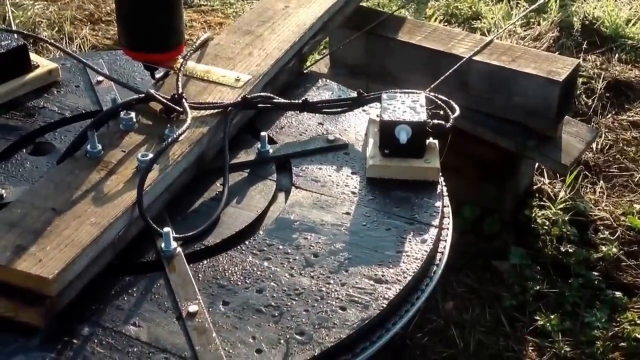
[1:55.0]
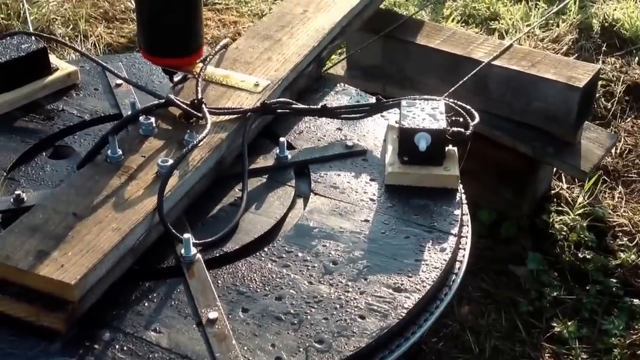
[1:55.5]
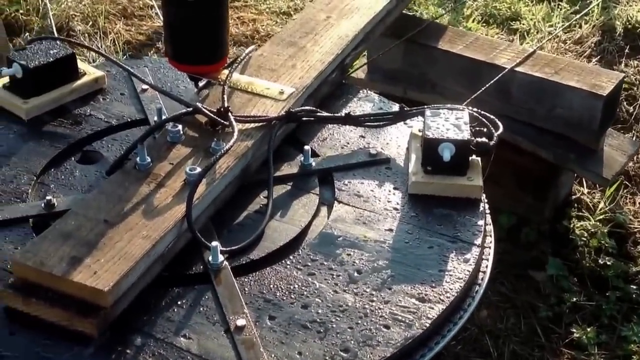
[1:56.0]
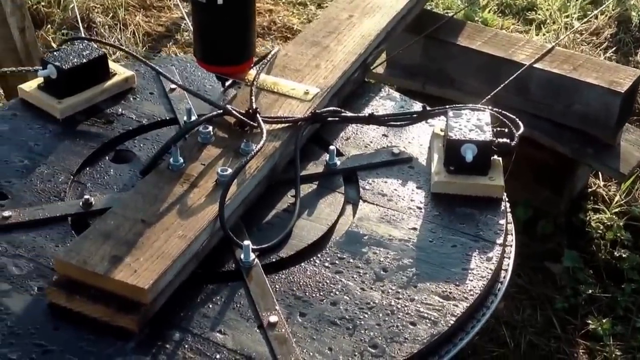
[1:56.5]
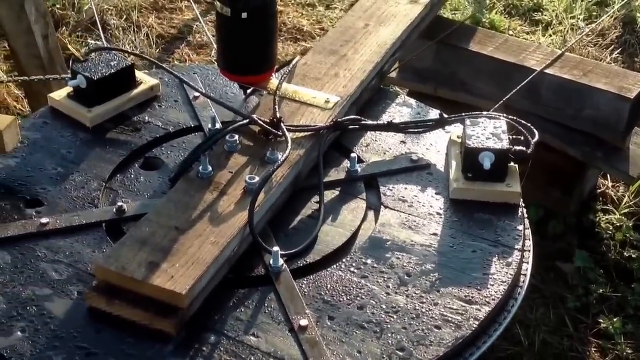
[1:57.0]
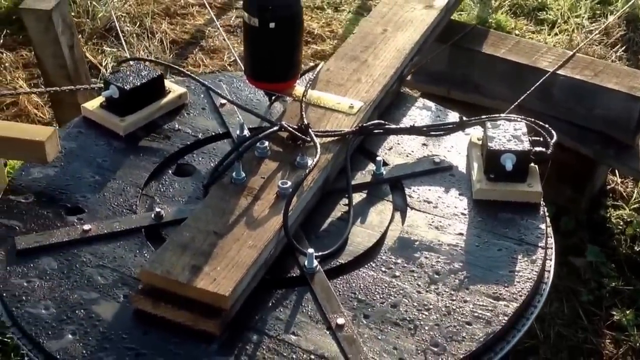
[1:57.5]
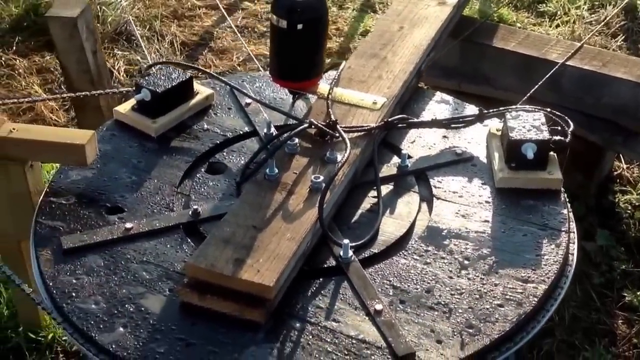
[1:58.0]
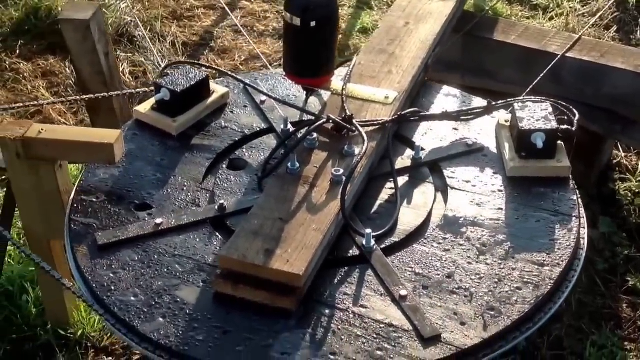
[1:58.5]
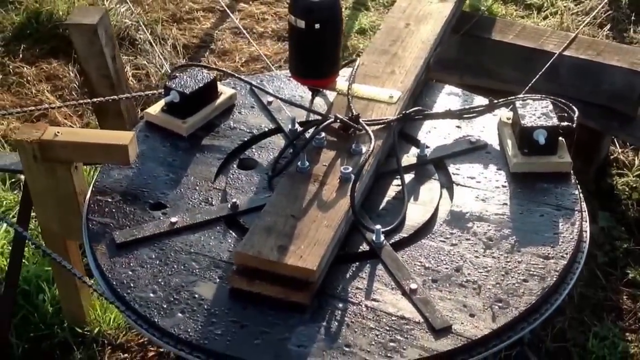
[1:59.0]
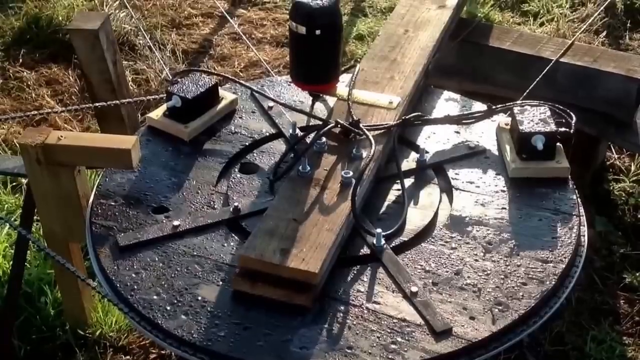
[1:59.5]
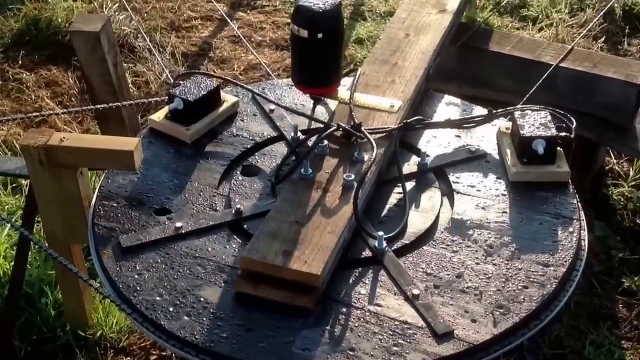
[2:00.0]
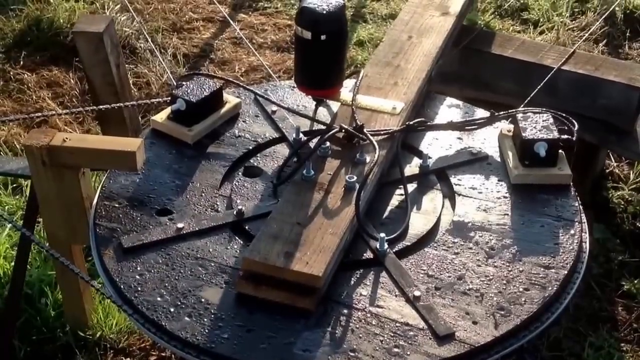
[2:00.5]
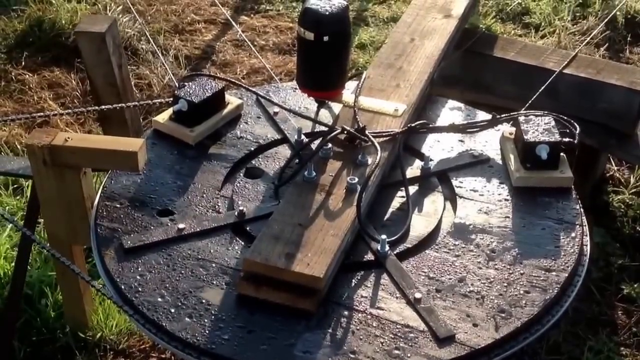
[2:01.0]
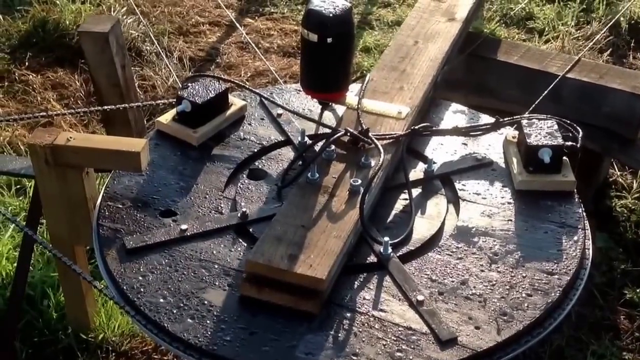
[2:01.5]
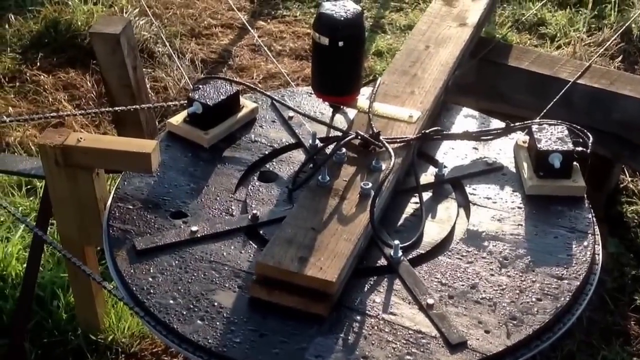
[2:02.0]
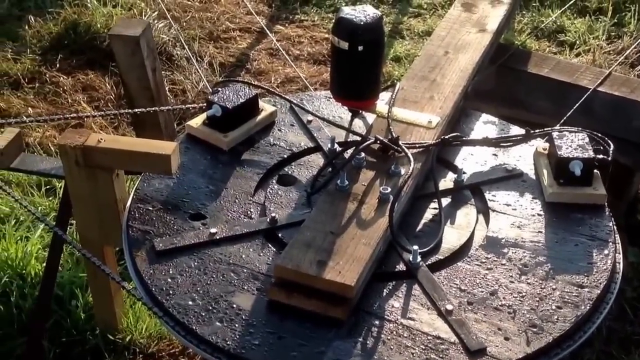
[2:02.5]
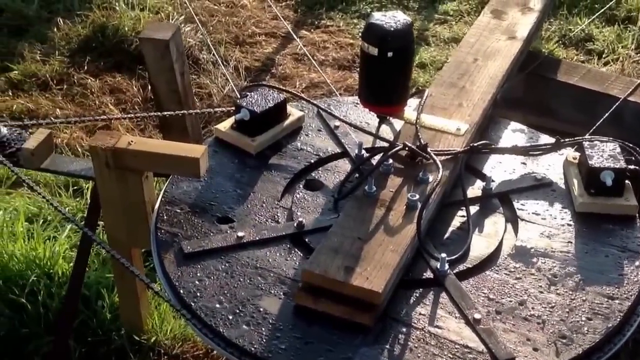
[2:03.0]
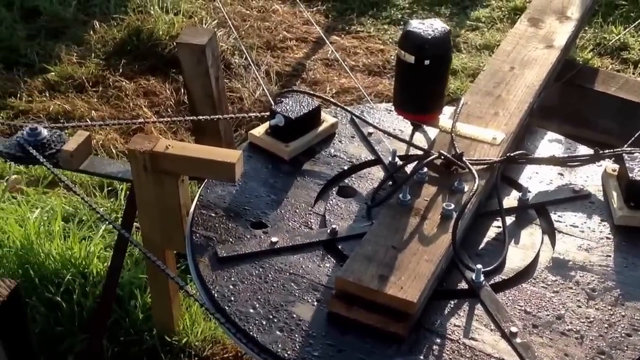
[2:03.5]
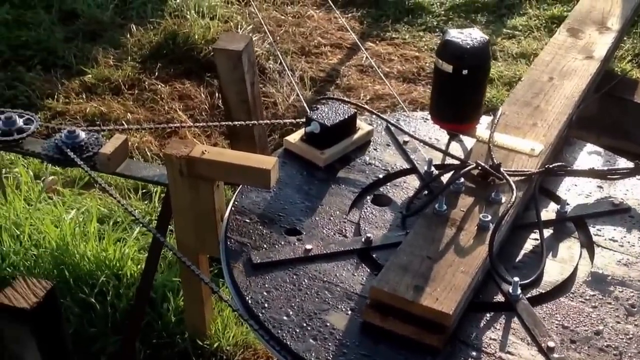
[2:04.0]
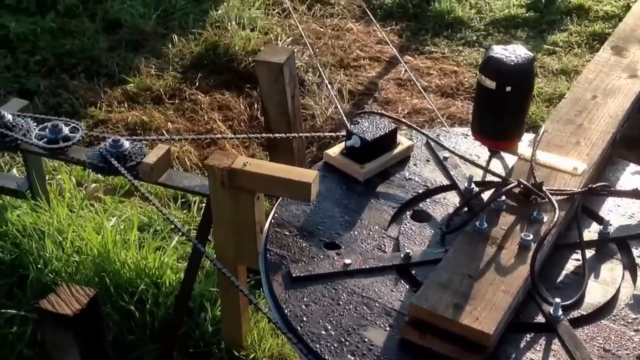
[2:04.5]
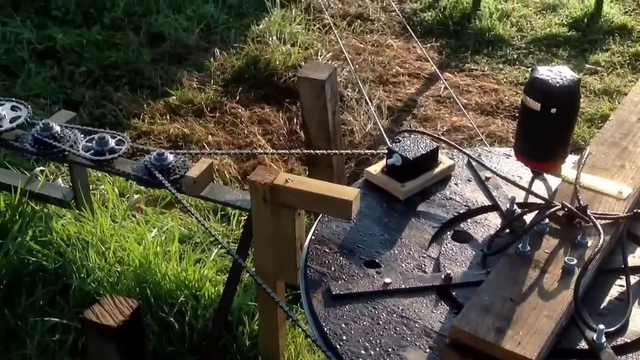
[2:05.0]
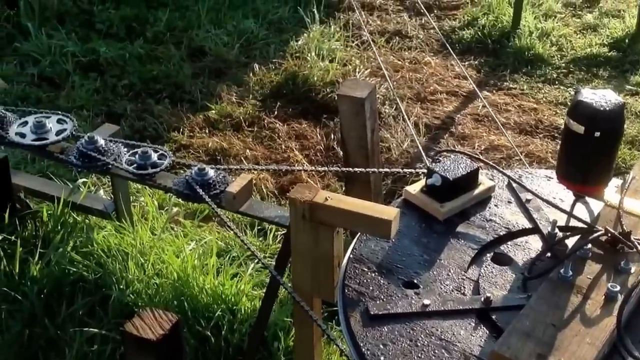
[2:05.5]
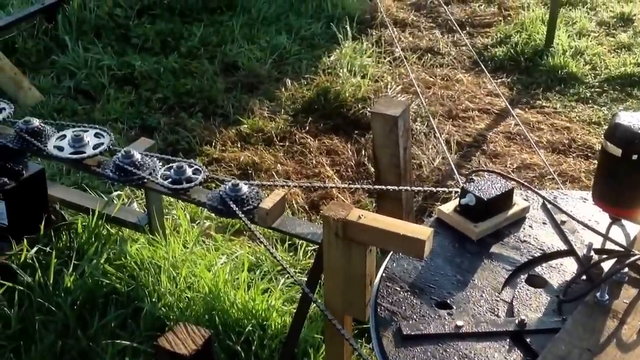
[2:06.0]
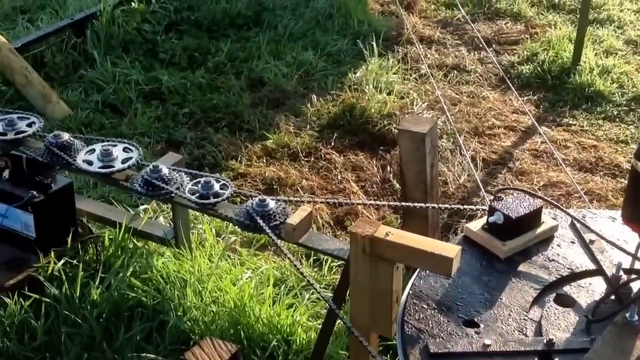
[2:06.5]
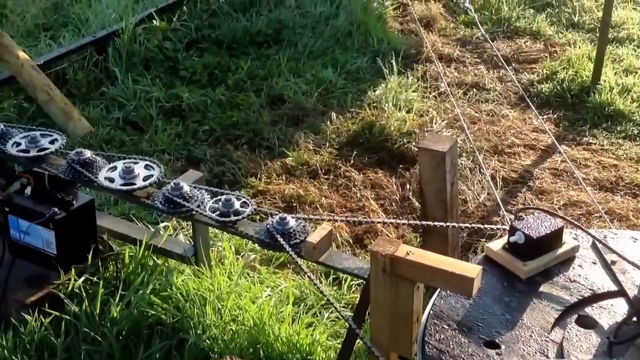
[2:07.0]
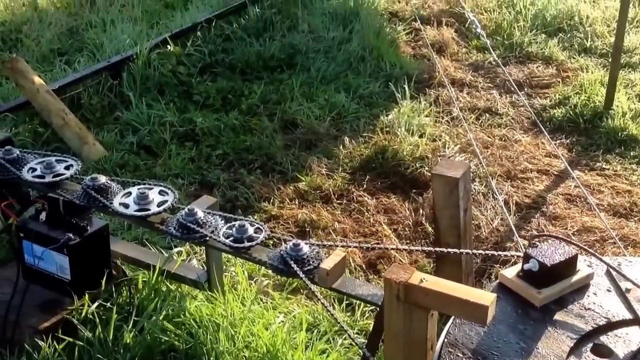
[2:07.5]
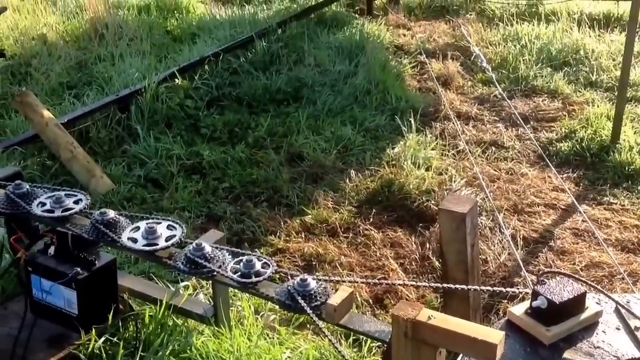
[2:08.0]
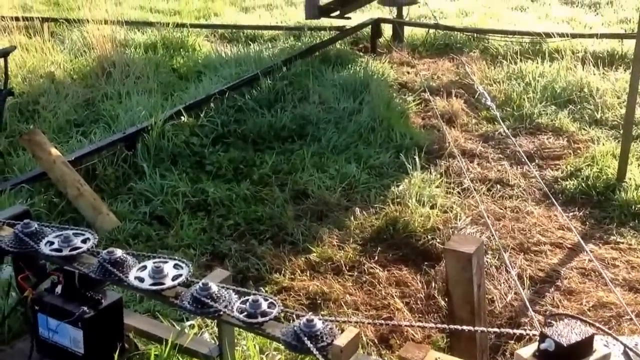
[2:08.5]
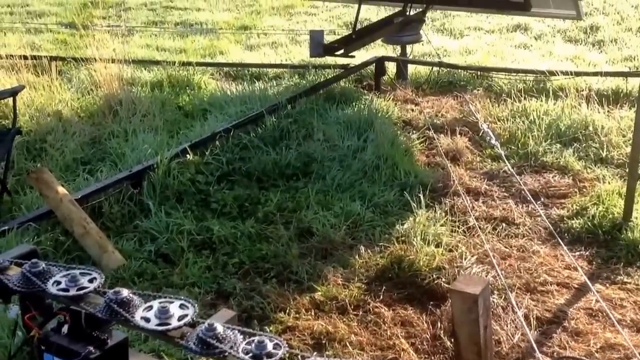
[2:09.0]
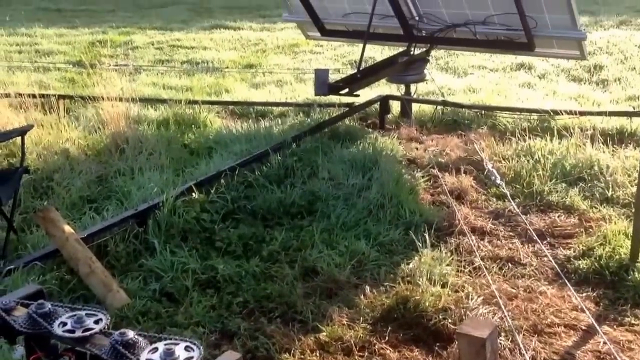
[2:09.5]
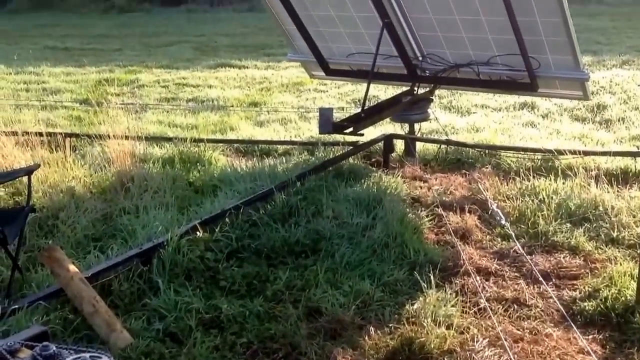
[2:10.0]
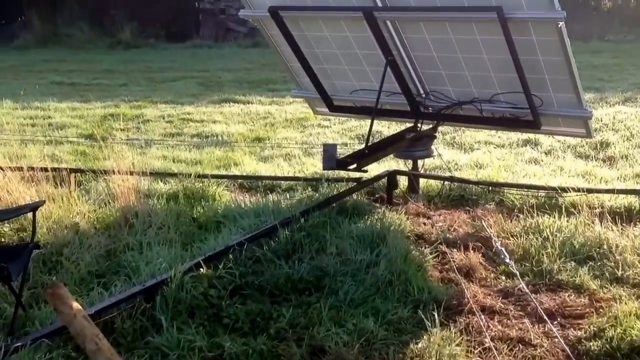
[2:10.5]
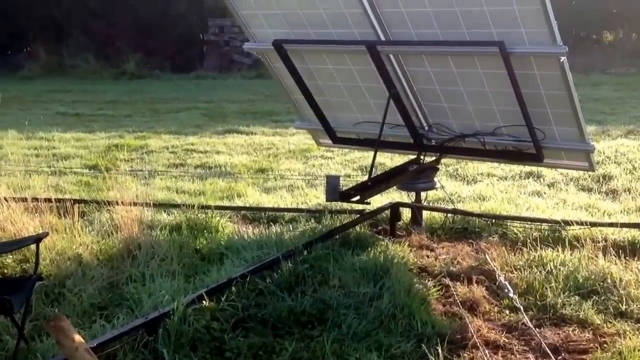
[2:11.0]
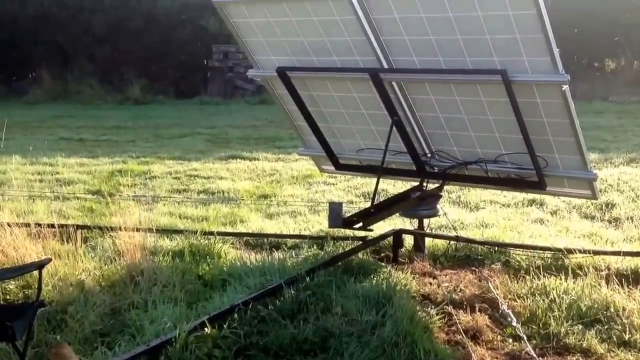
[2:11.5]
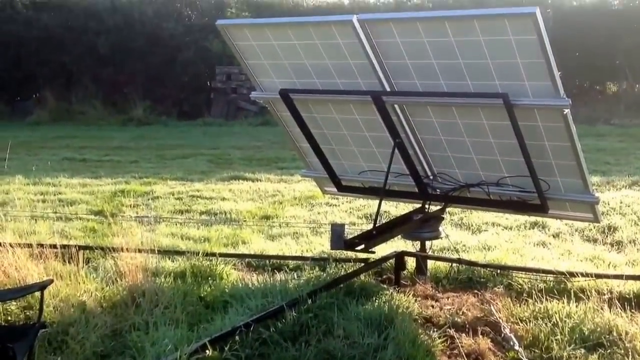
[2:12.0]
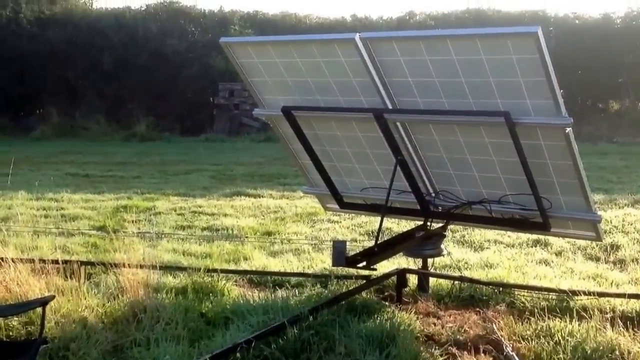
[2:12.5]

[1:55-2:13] A large, flat, round disc is in view, with a long horizontal wooden beam attached from its center. Wires and other components are visible; on either side of the disc are components that look like flat rectangular wooden pieces with black boxes on top of them, and wires are attached to the disc. The camera focuses on the top view of the disc, then pans to the left to show the length of a flat metal rod attached to this large wooden disc. The rod has about six other metal wheels on it, connected to one another with small chains to form an elaborate pulley system. In the back is mostly green grass with a touch of brown, dried-out grass. The camera pans further outward to capture the back of a large solar panel and the entire grassy field.